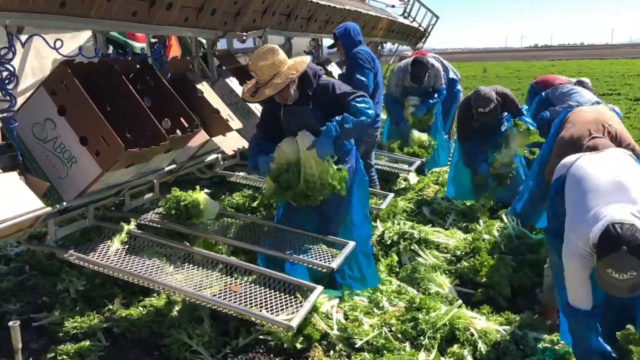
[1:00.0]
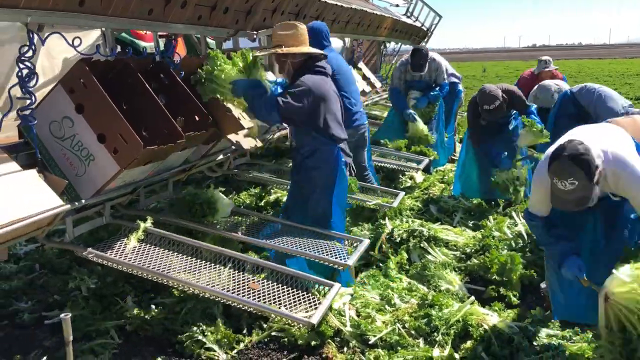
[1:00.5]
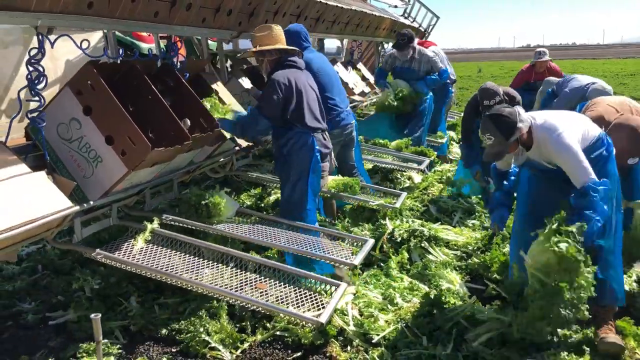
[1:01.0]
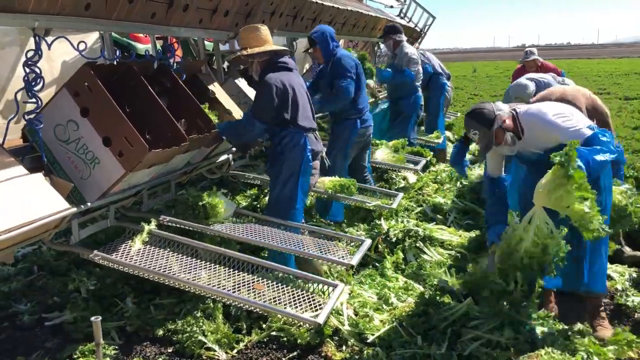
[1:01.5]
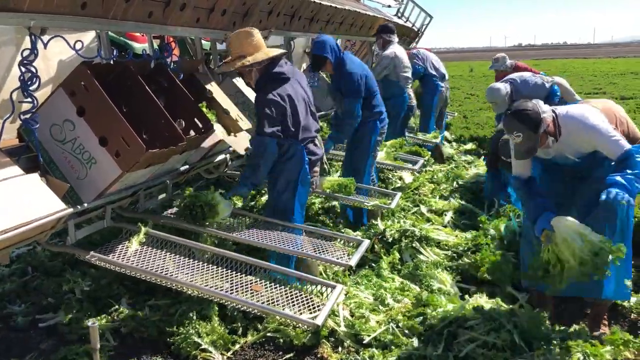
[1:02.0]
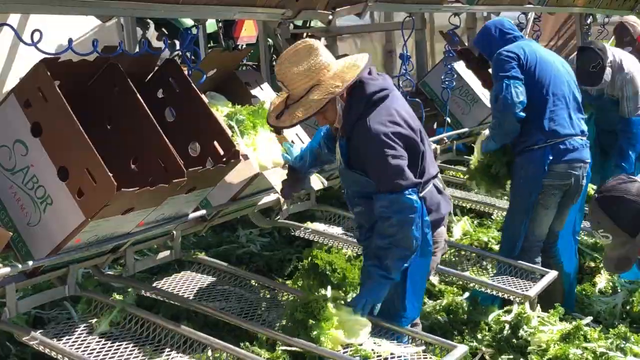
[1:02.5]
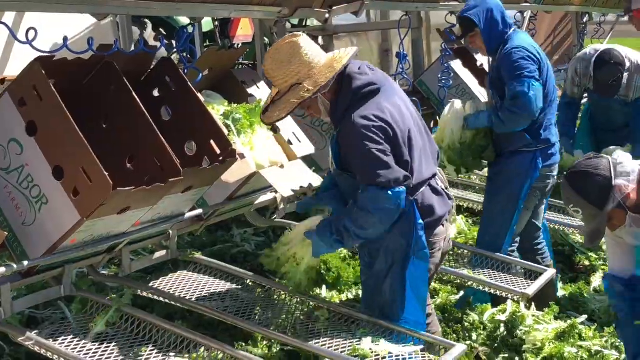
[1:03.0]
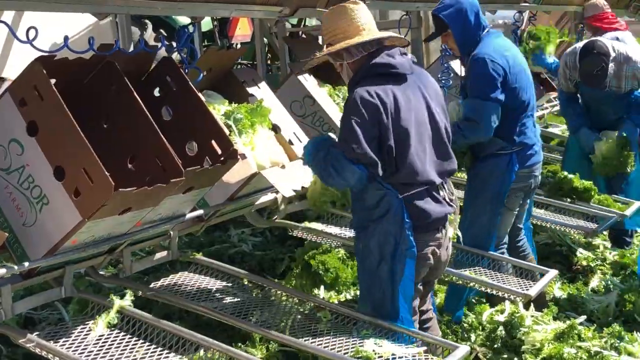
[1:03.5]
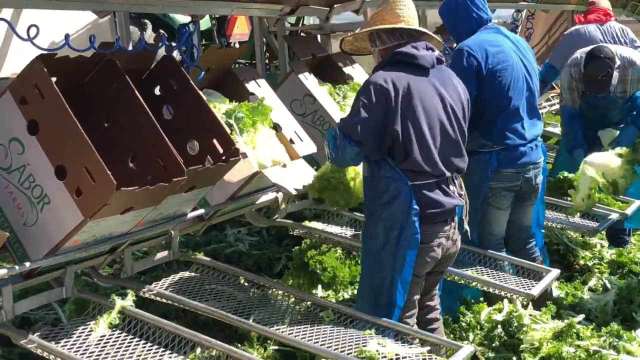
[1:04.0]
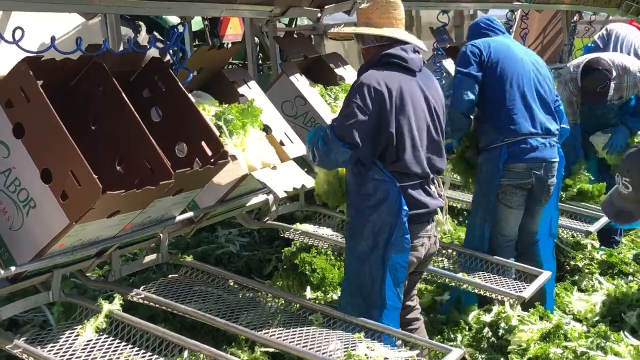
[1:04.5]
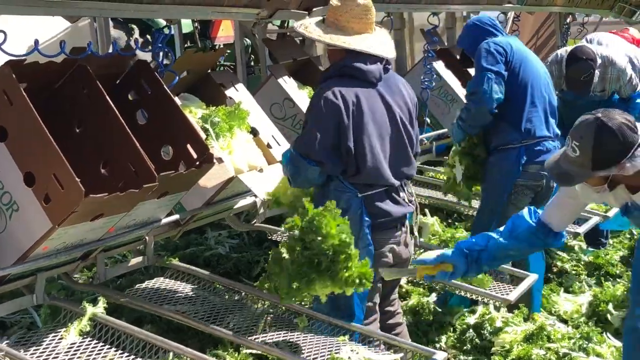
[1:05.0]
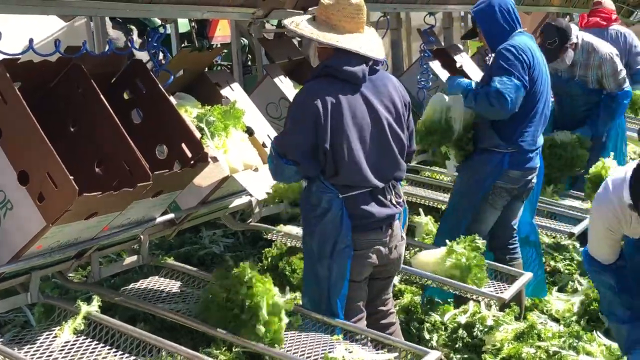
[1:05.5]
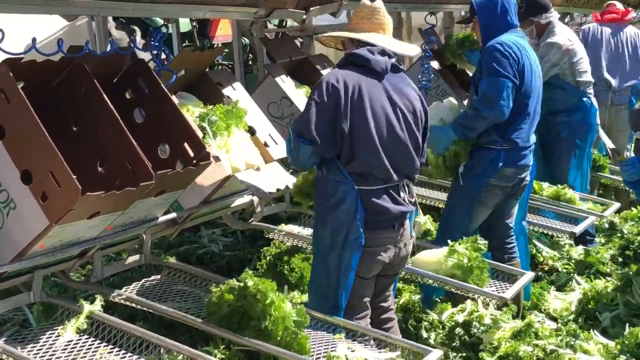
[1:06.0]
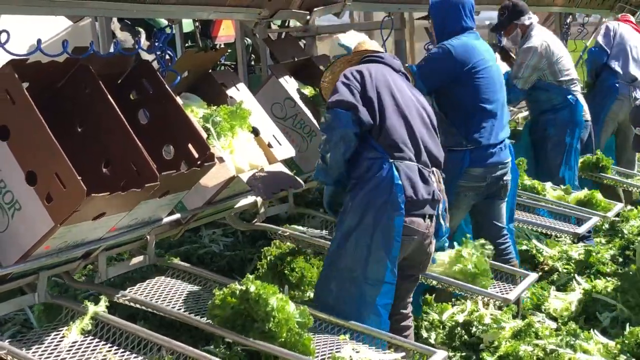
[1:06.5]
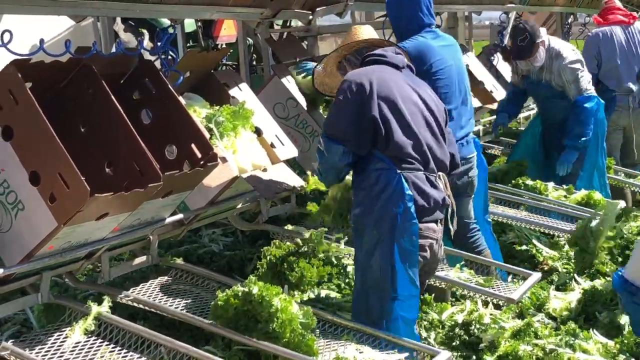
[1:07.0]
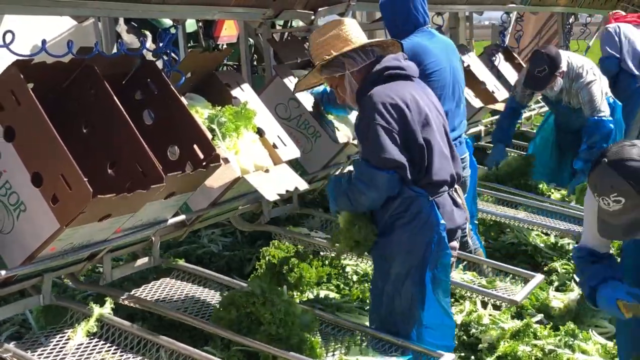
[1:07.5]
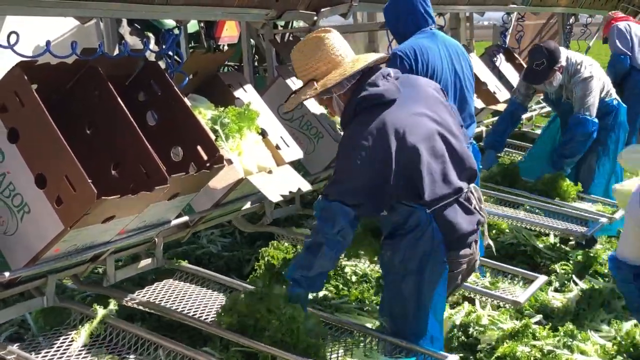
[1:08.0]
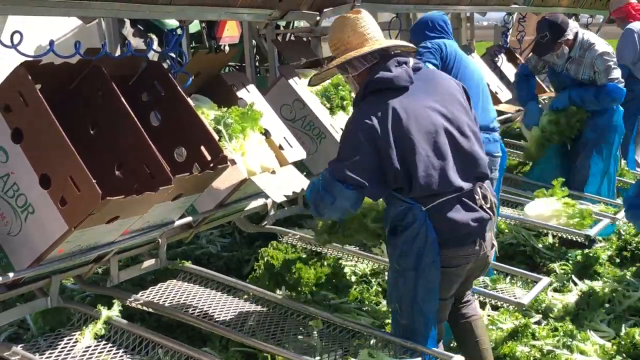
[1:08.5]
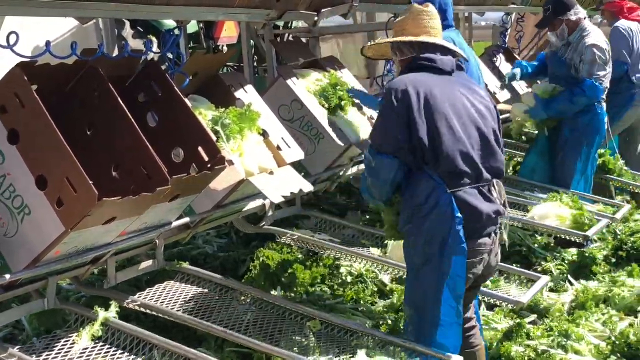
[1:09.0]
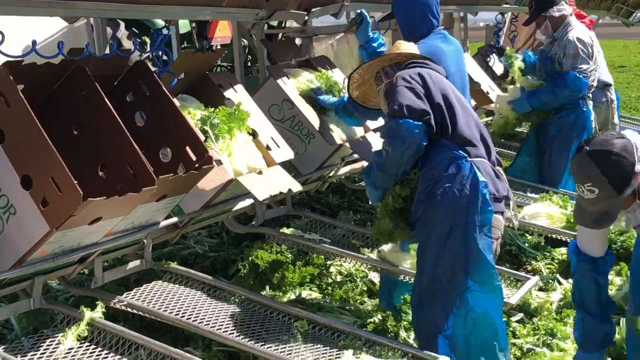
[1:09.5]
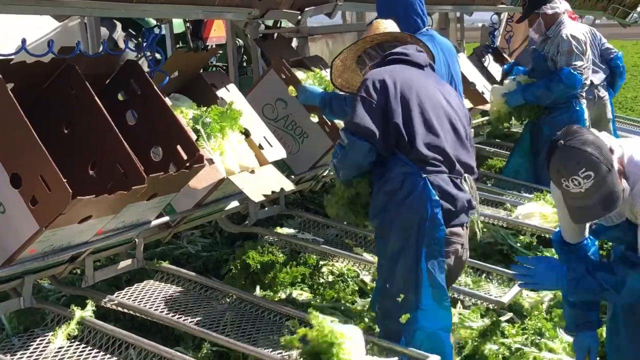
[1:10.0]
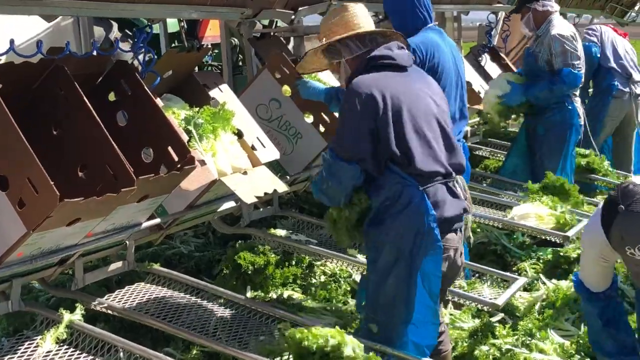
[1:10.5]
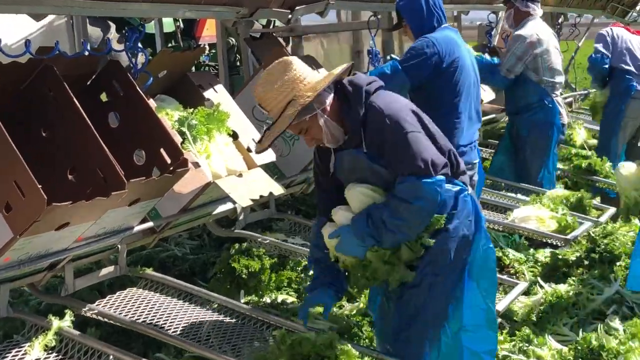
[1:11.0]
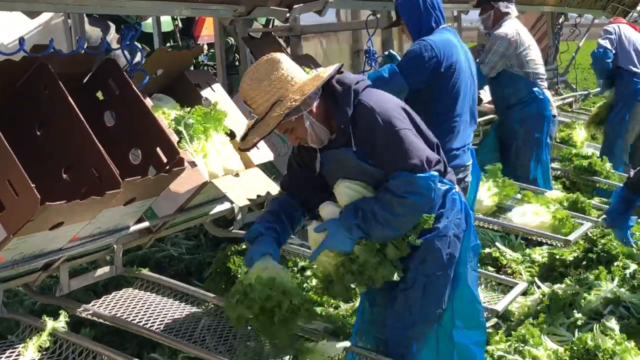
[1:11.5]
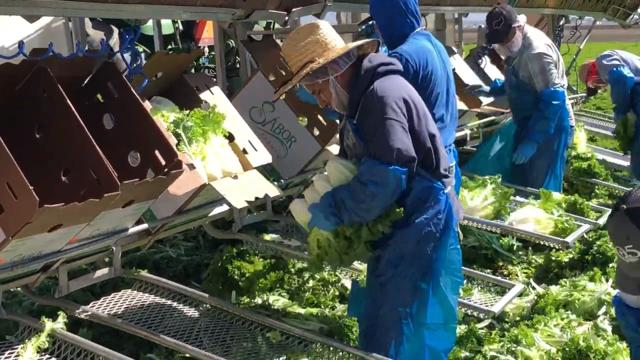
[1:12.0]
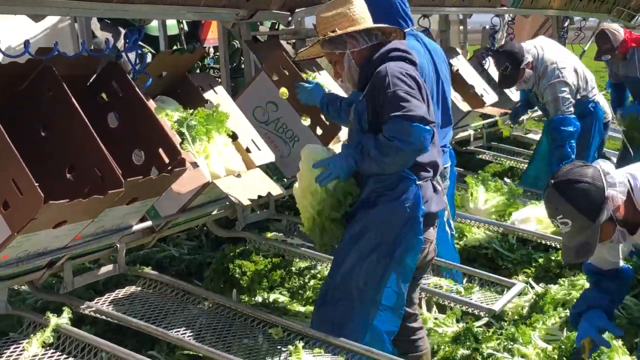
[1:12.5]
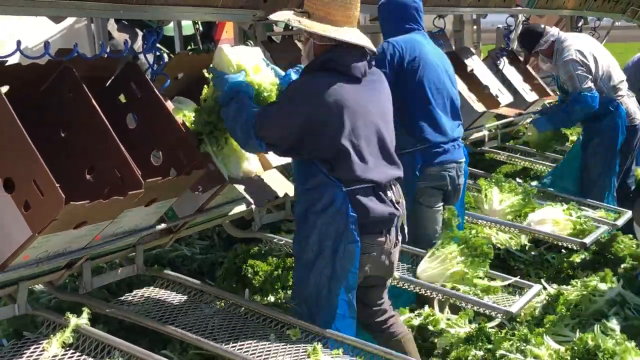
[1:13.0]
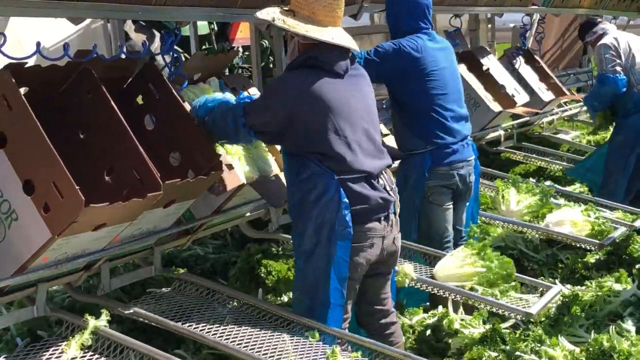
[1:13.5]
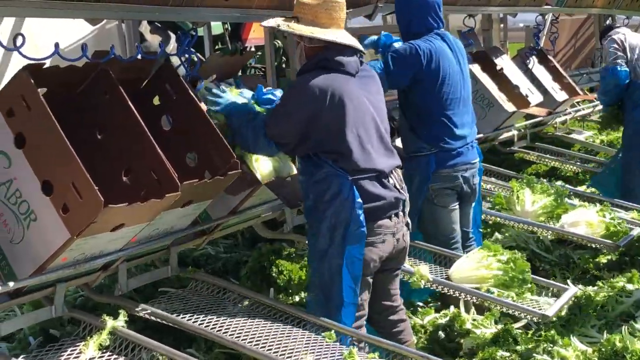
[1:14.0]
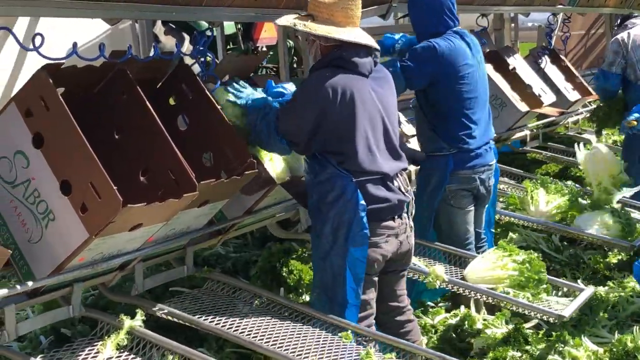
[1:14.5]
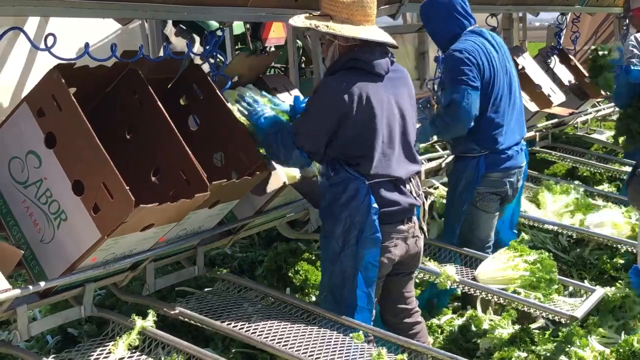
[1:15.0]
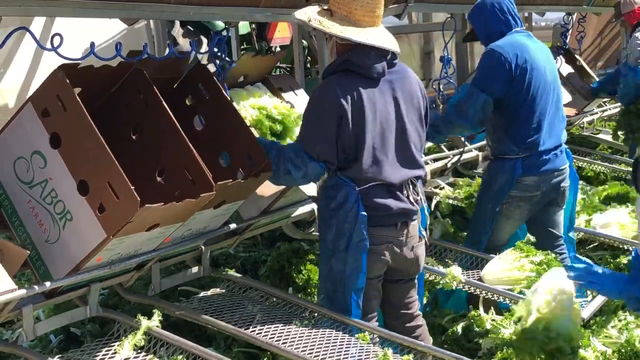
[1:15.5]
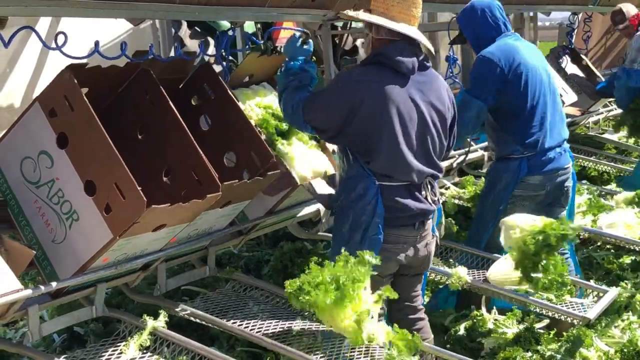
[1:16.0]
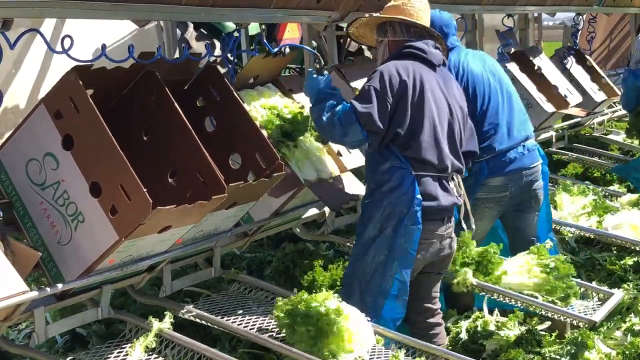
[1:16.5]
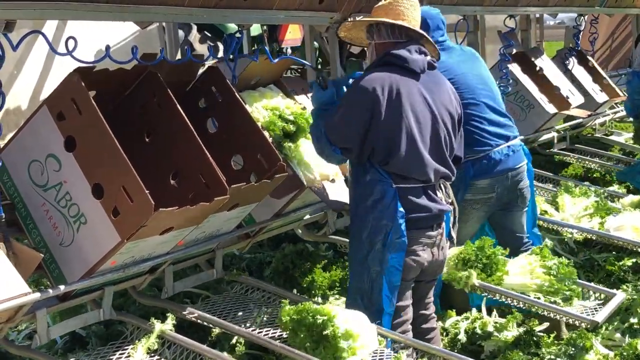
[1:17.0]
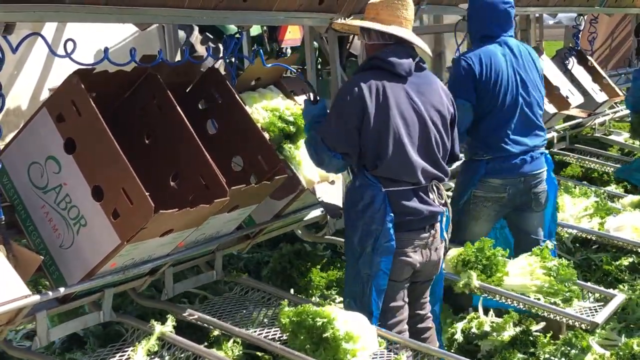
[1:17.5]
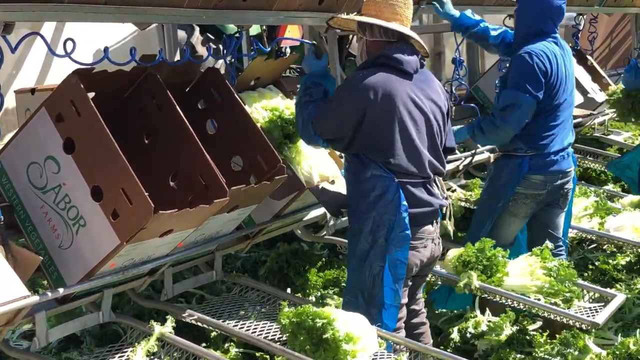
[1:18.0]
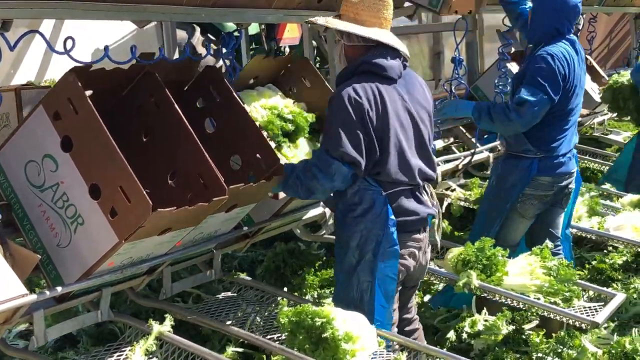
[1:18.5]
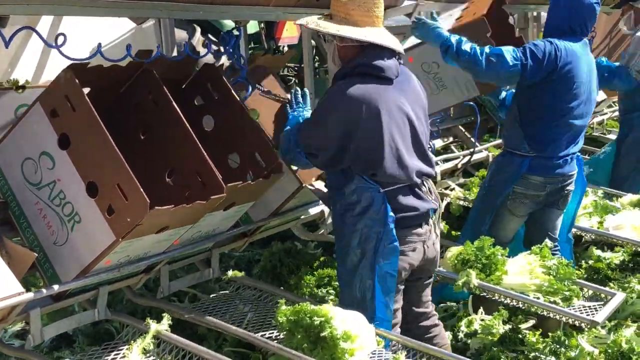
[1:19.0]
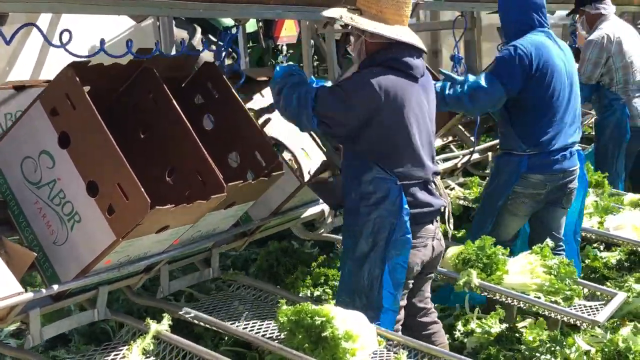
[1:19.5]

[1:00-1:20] A worker is standing directly in front of a very full box. He picks up some of the plants from the net and appears to drop some of them on the ground. He picks up more plants from both sides, gathers them all against his waist, places them all in just the top of the box, and presses them down. He then grabs one of the blue wires next to the box and holds it over the box of plants; the wire appears to have a nozzle on the end, possibly carrying either pesticides or water. He appears to spray onto the plants, then closes the box while still holding the blue wire in his hand. Another worker to his right is performing the same actions and has just closed another box; he wears a blue hood and also the loose-fitting gloves.